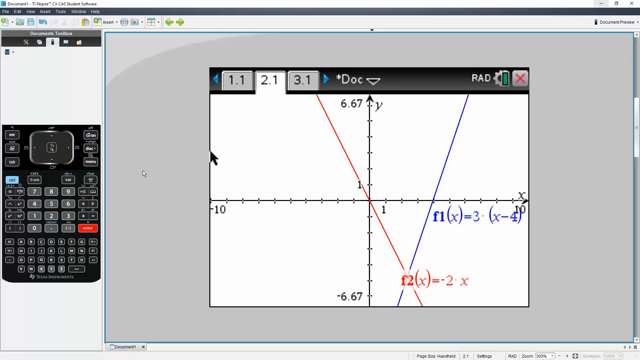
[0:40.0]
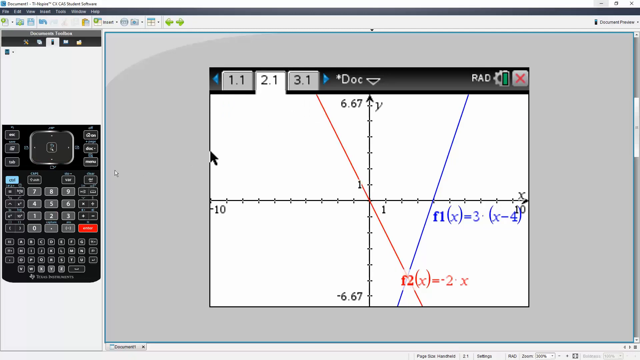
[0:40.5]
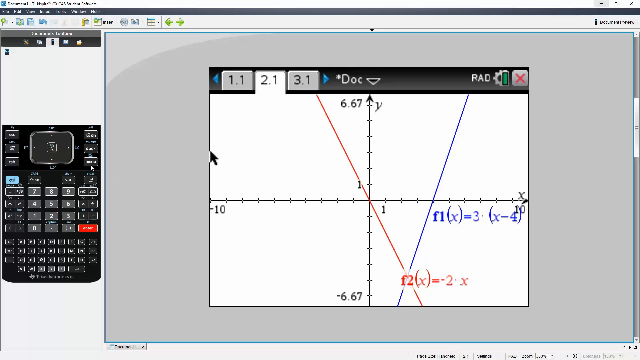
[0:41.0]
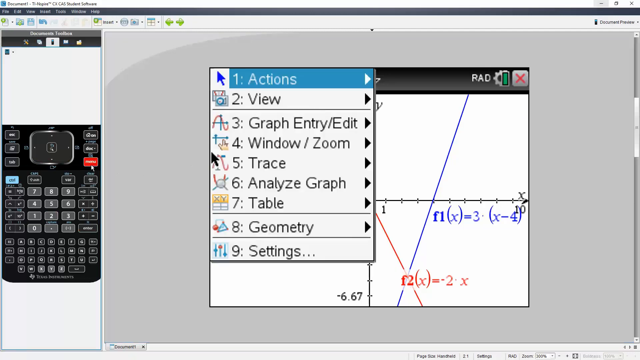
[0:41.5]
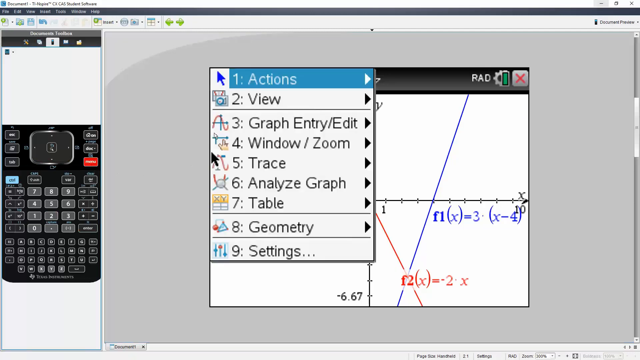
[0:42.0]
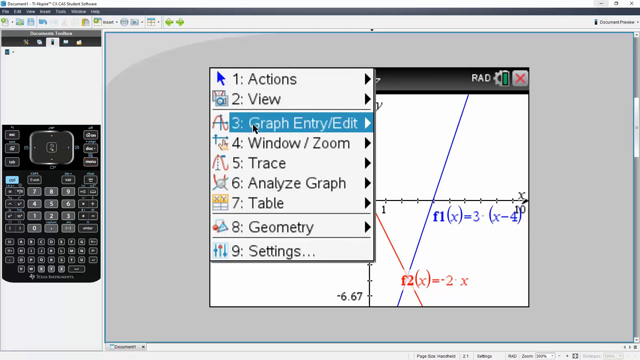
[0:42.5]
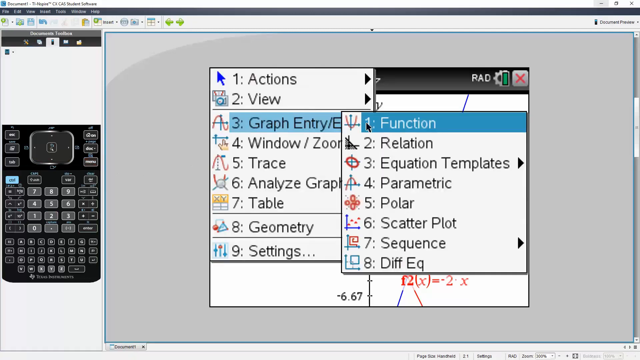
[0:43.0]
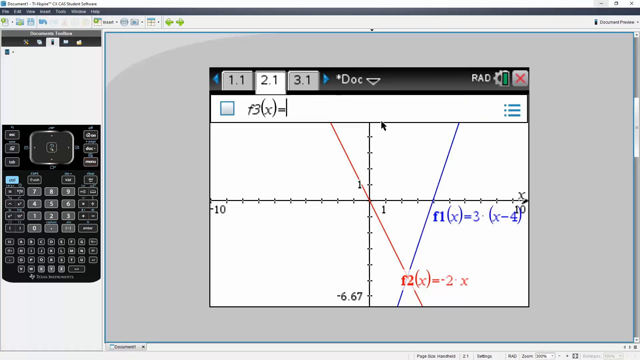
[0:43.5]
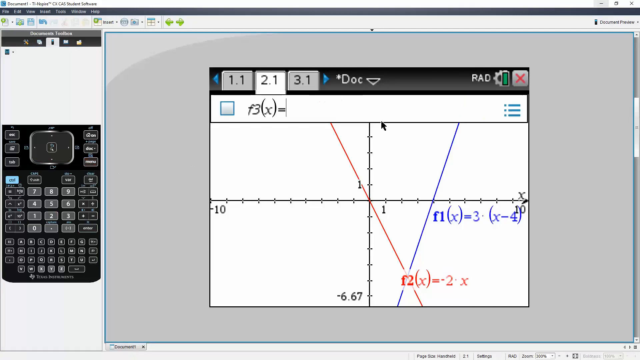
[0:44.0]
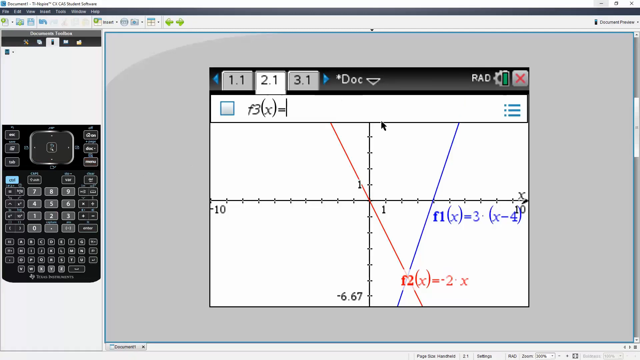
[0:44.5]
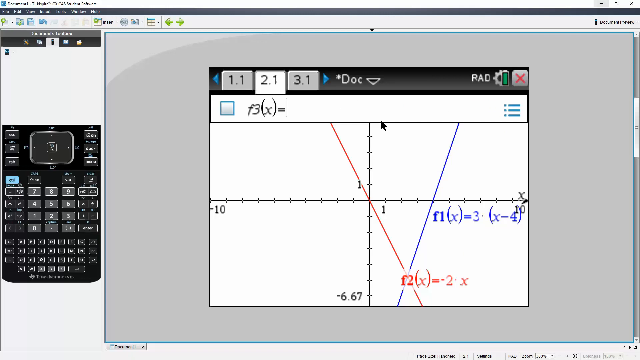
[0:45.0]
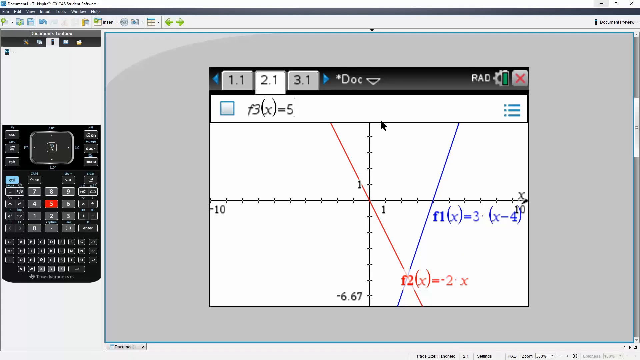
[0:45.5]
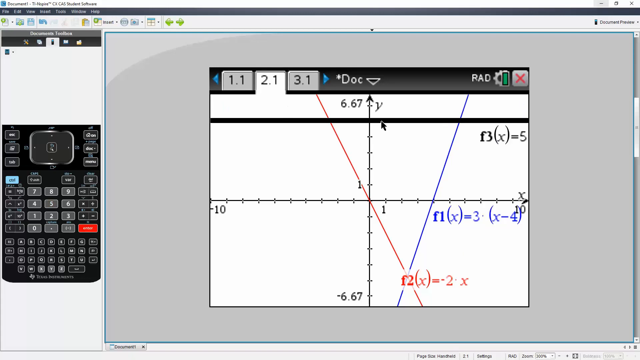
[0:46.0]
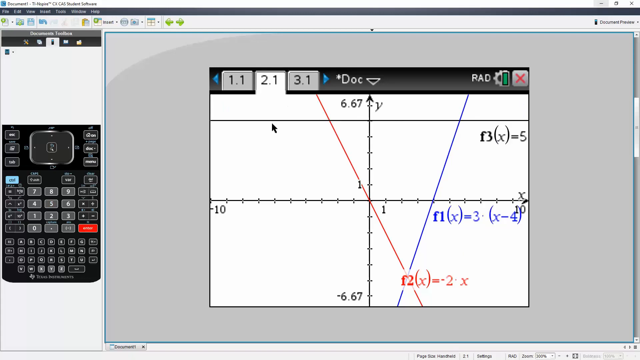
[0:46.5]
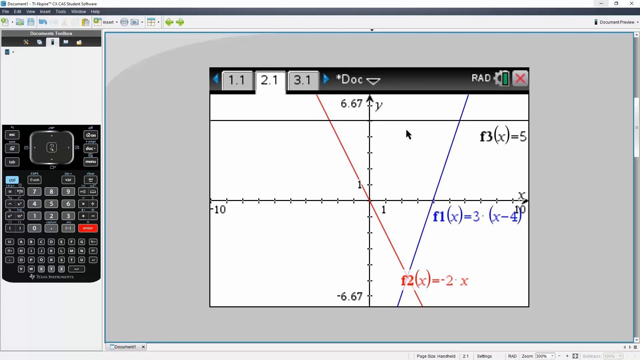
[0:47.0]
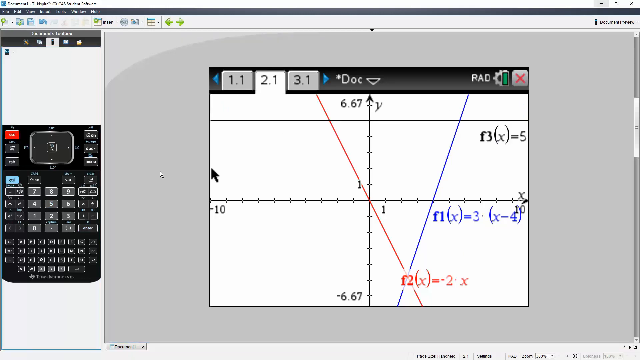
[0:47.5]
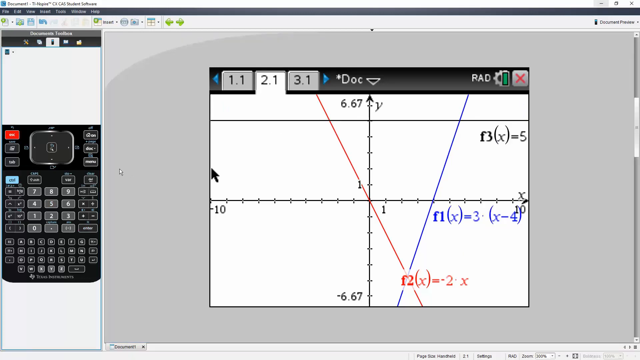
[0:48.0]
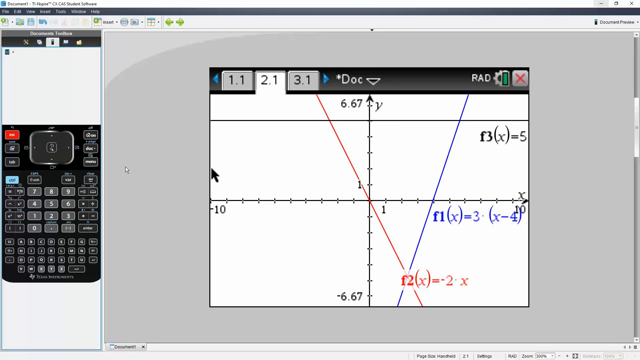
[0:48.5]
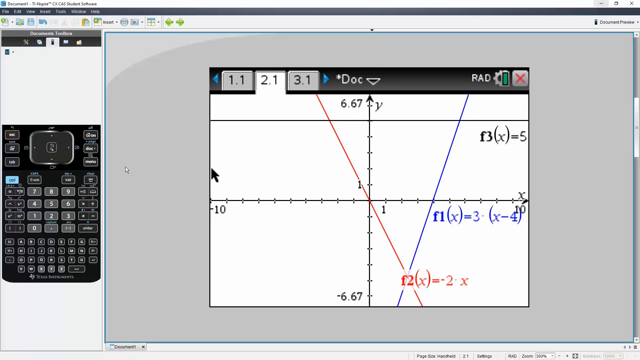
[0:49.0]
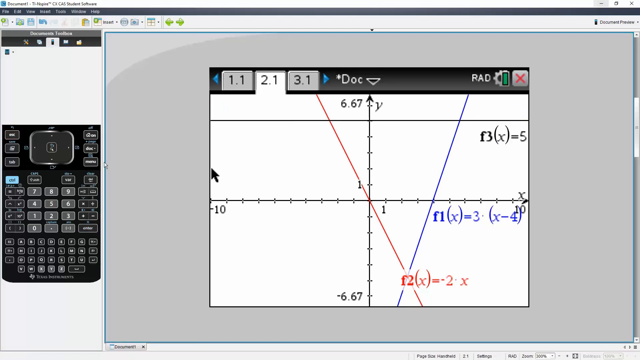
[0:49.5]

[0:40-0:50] An equation is shown with y equals 3 and brackets containing x minus 4, and below it y equals 2 minus 2x. A graph is shown with a calculator next to it. There are two lines on the graph that look different: one is red and the other is blue.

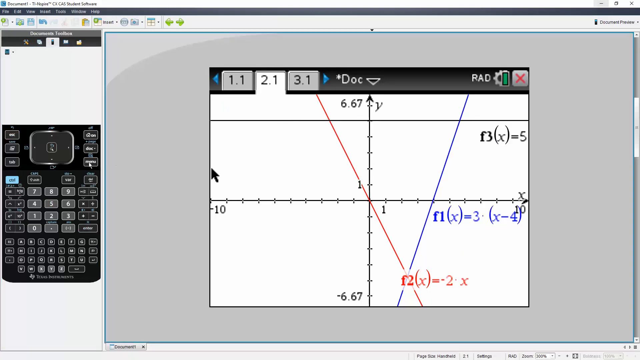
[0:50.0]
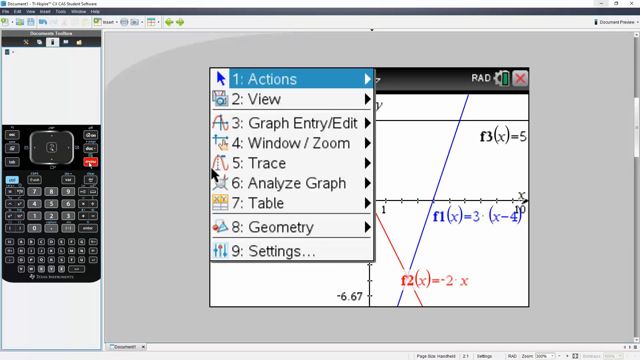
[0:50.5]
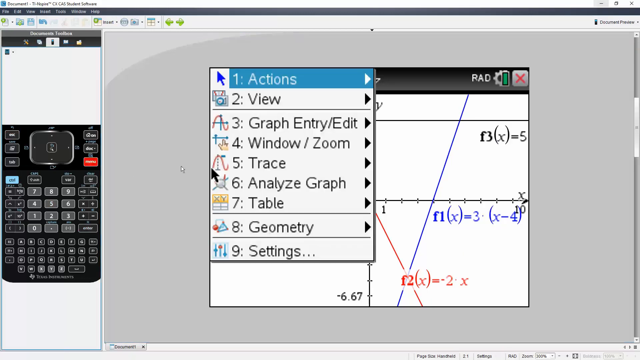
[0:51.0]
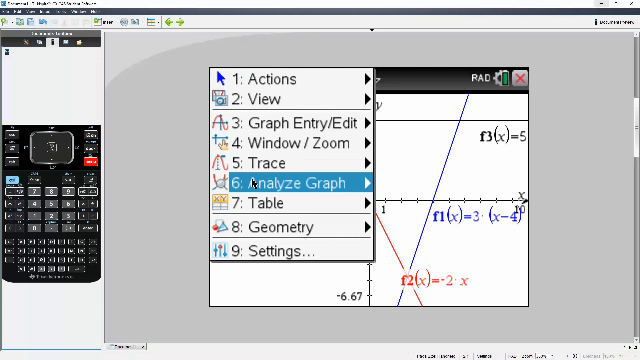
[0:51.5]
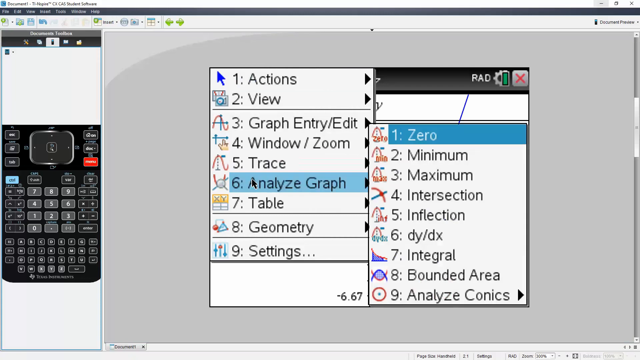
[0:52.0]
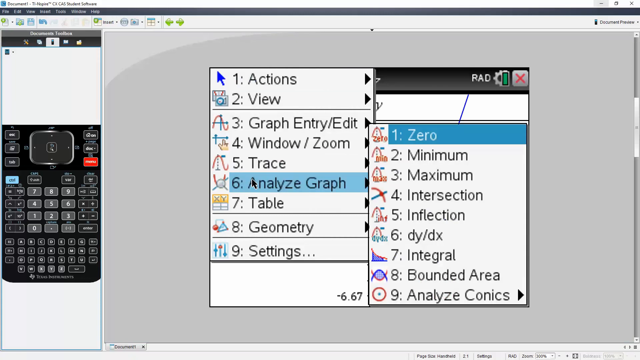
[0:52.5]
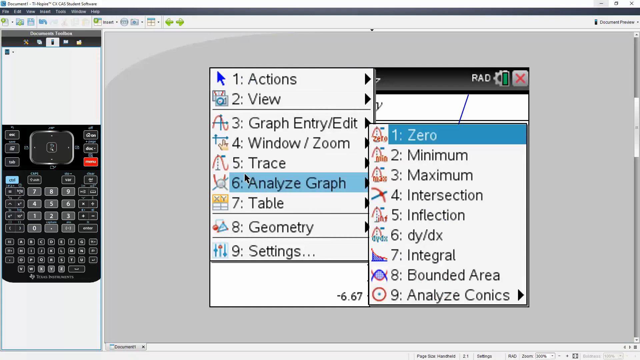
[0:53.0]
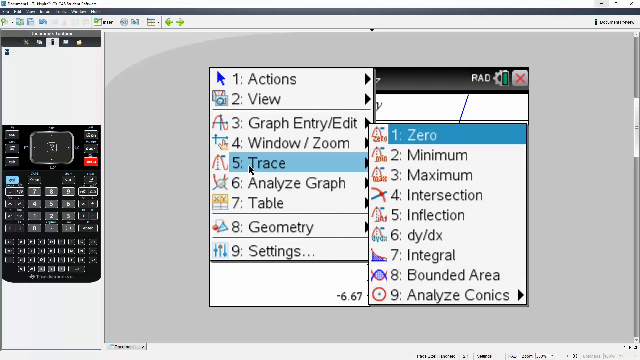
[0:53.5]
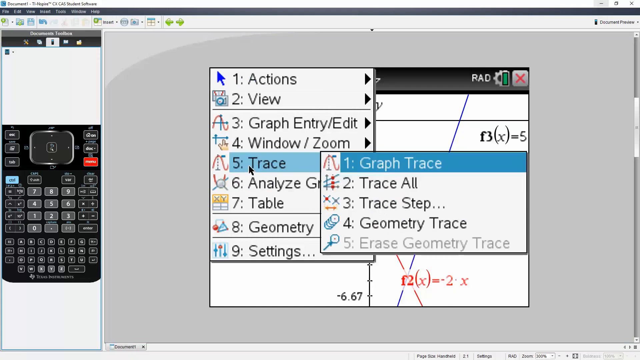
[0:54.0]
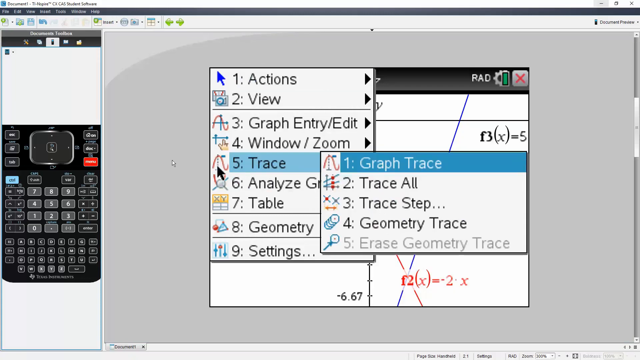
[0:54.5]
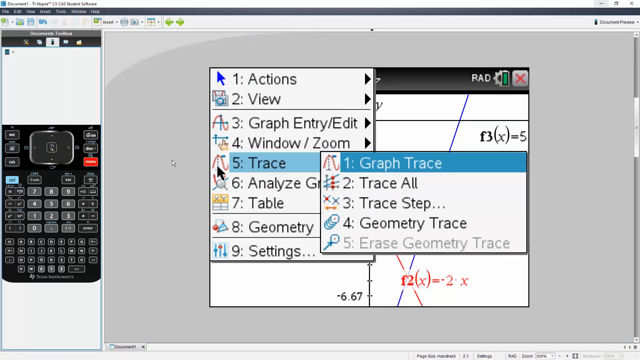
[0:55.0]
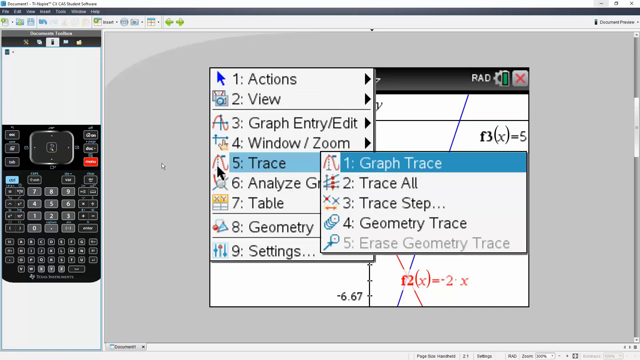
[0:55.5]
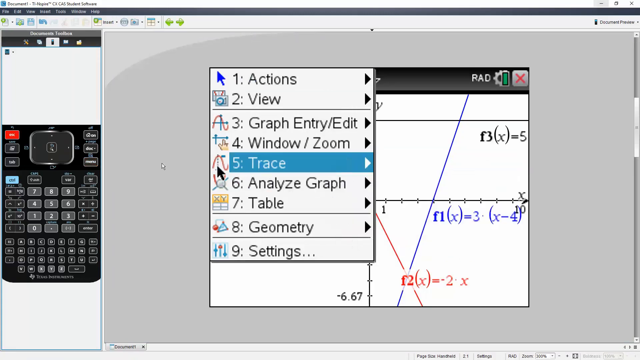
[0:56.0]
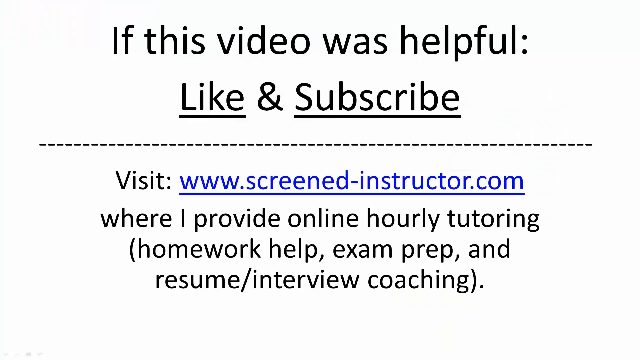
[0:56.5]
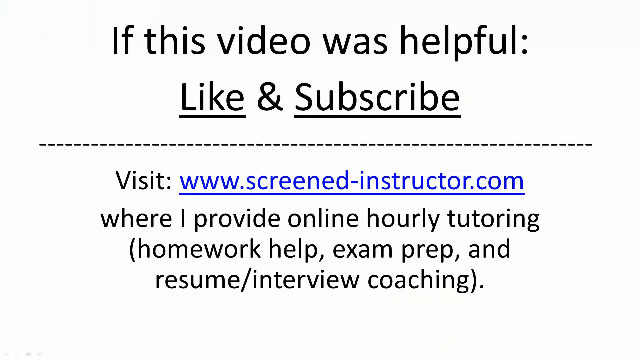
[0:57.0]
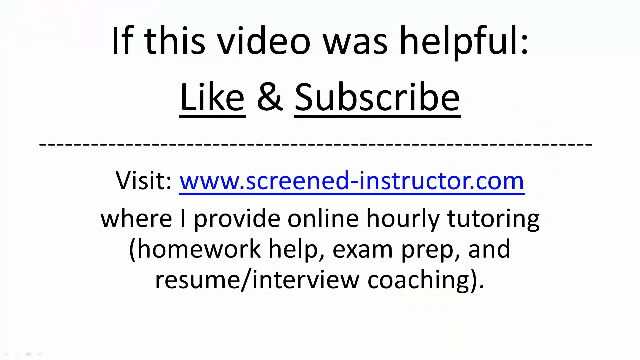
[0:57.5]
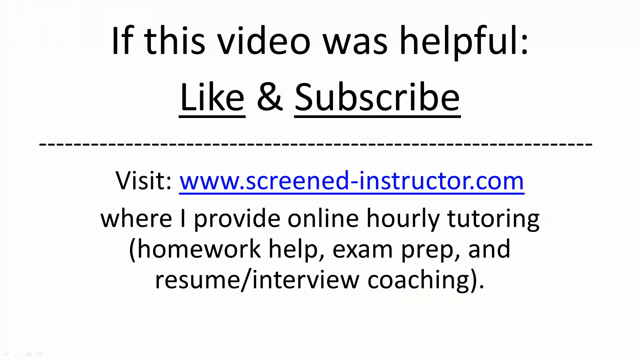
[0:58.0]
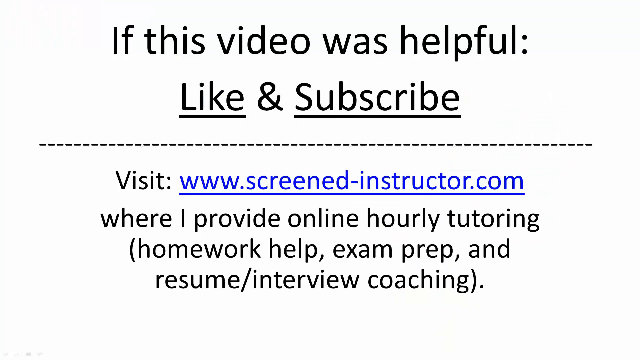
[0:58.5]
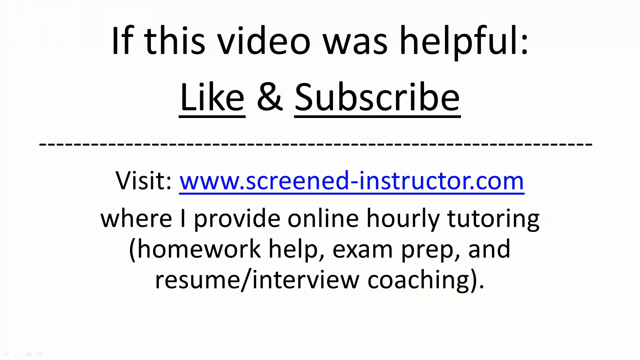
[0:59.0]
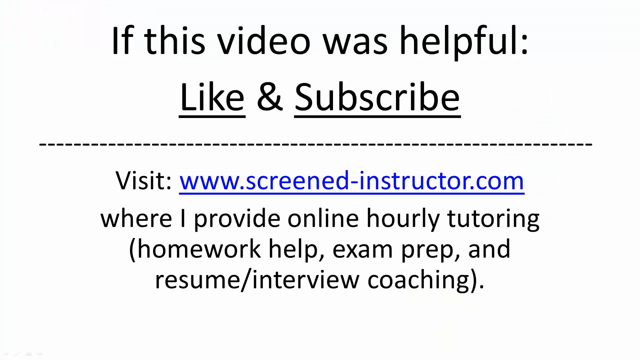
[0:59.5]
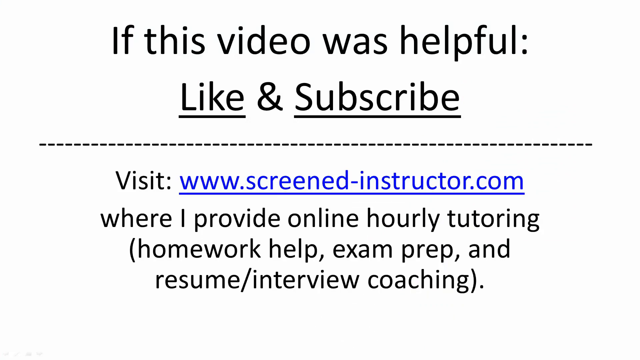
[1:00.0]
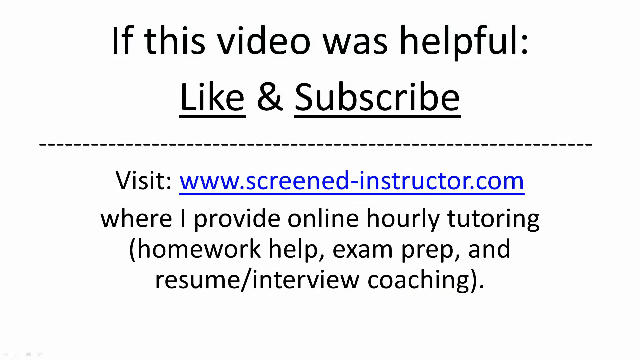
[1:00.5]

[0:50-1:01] The graph appears to be the main focus. It has minus 10 on one side and plus 10 on the other side, with x where plus 10 is and y on top. The equation is being solved, and a calculator is shown.